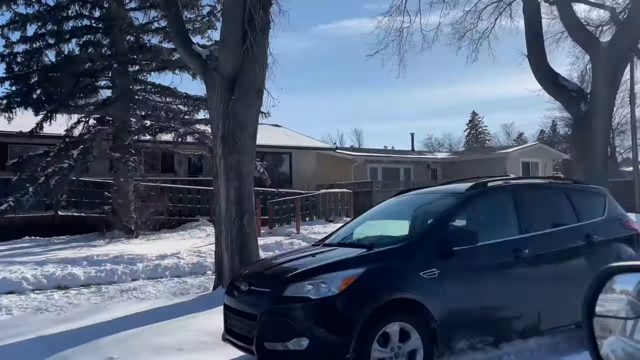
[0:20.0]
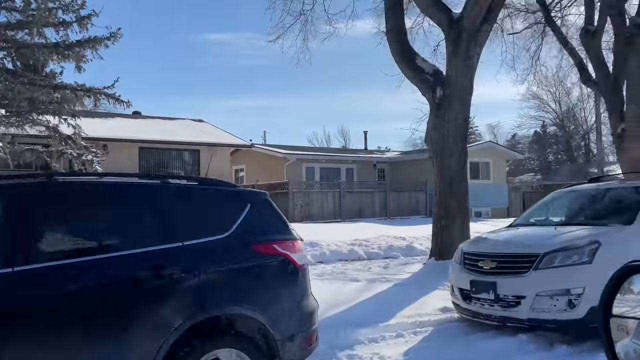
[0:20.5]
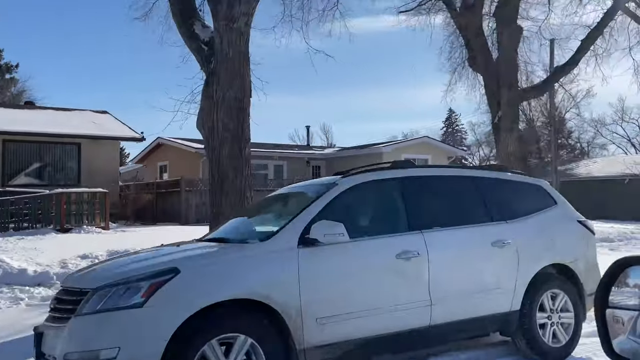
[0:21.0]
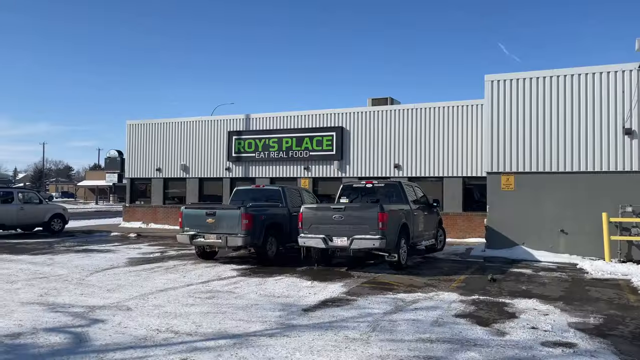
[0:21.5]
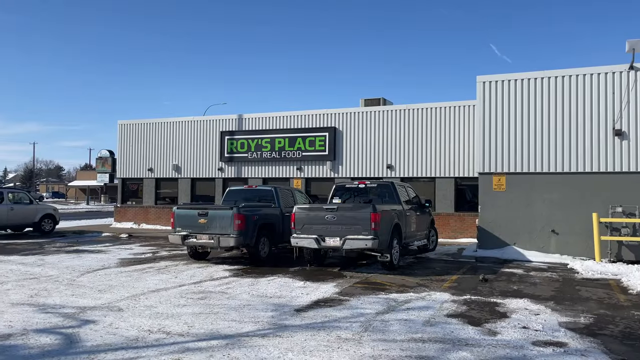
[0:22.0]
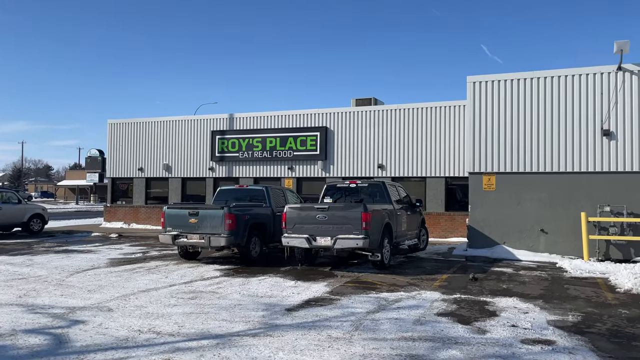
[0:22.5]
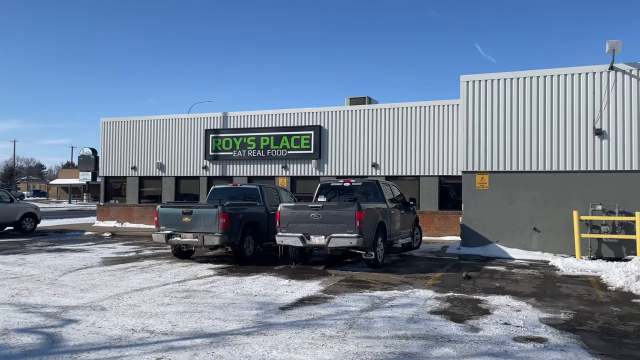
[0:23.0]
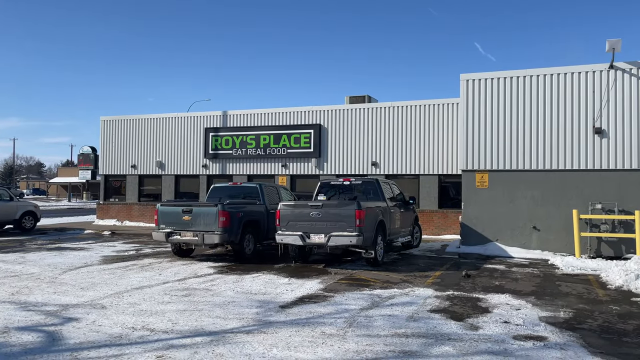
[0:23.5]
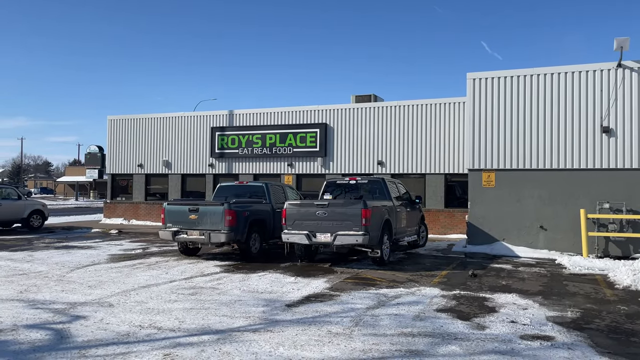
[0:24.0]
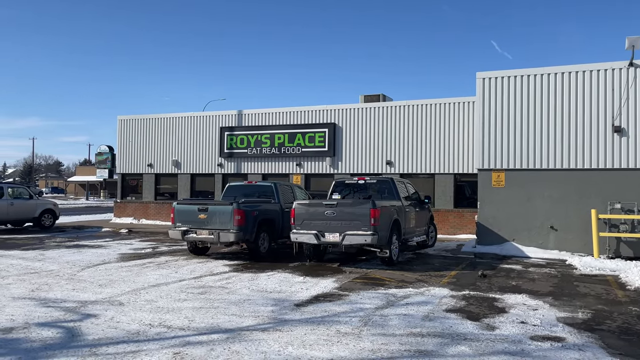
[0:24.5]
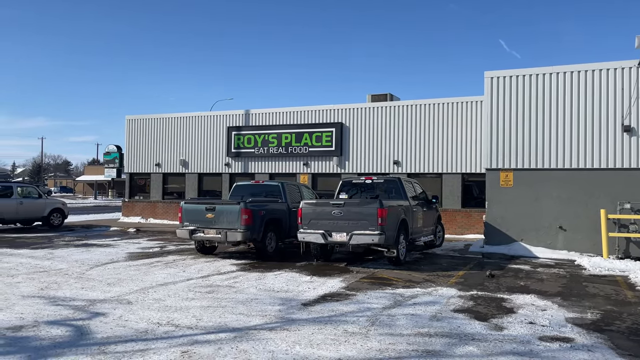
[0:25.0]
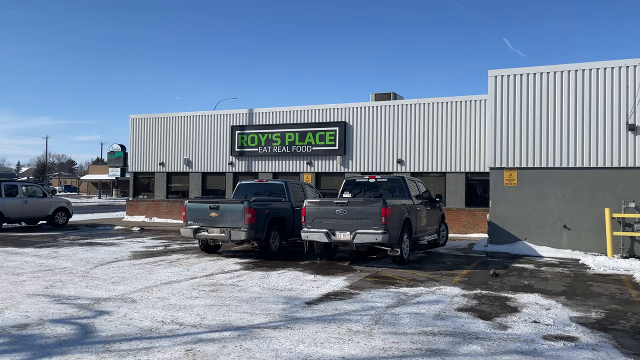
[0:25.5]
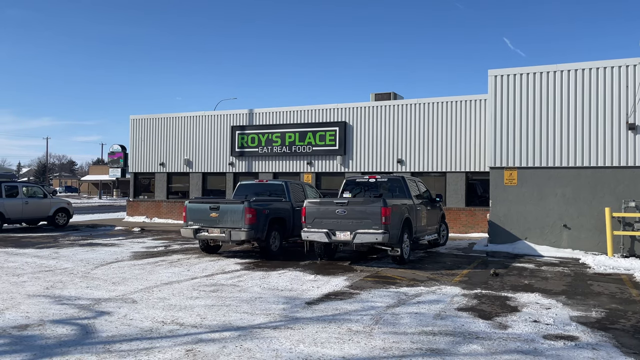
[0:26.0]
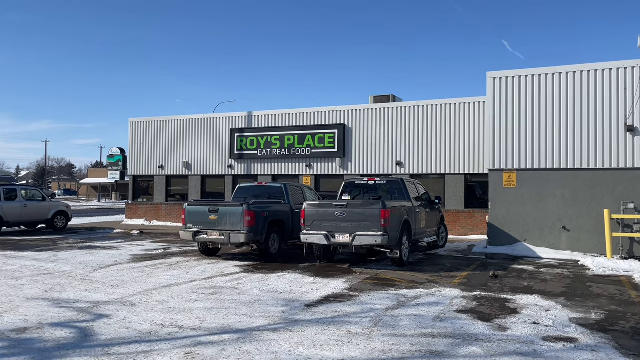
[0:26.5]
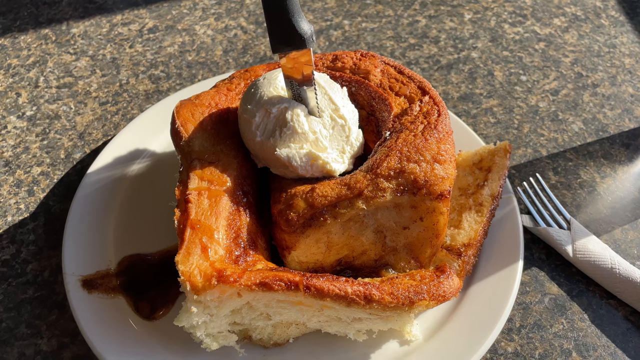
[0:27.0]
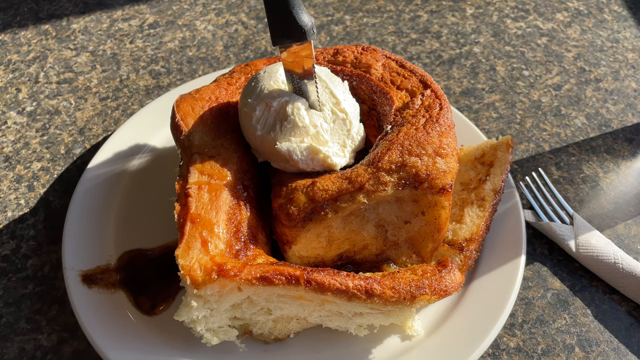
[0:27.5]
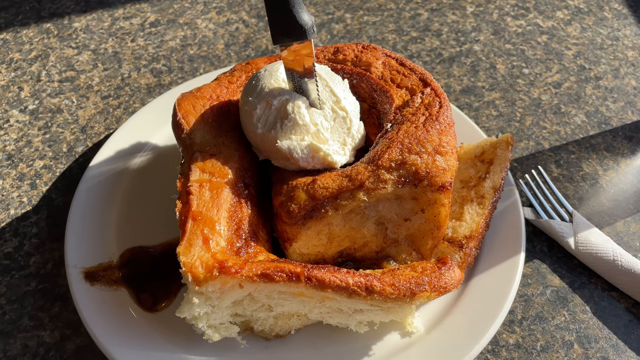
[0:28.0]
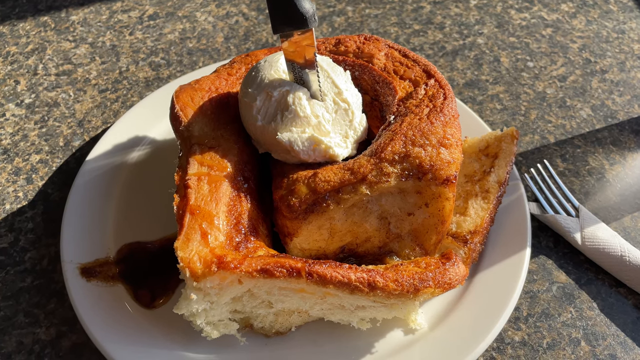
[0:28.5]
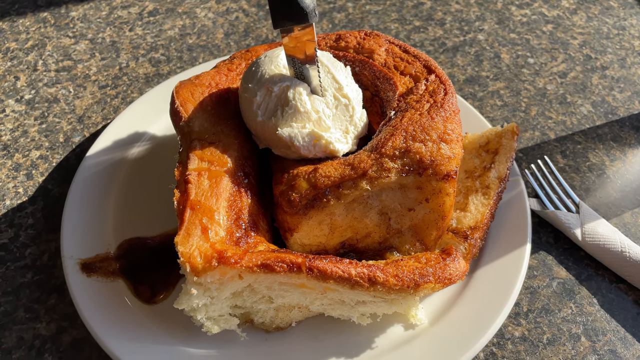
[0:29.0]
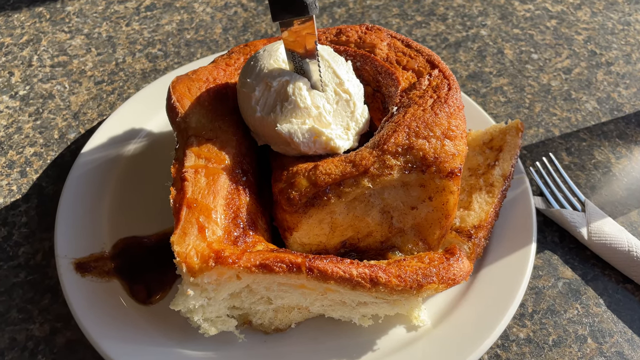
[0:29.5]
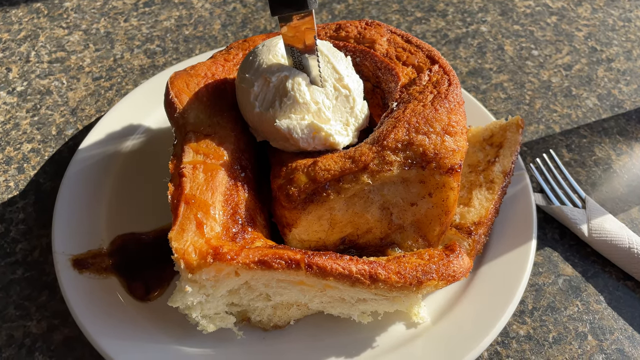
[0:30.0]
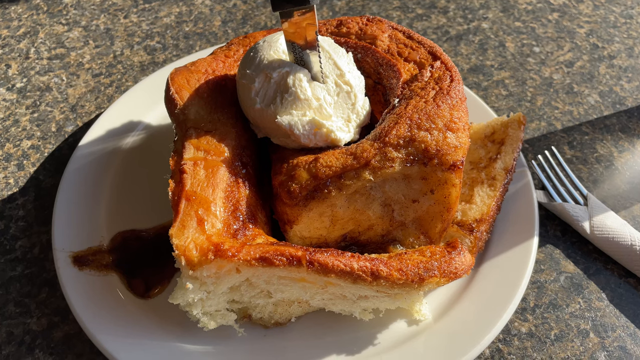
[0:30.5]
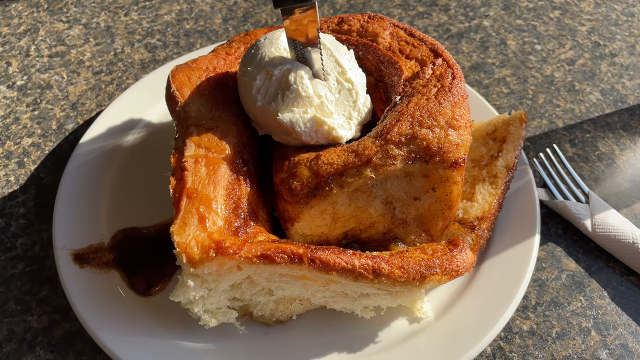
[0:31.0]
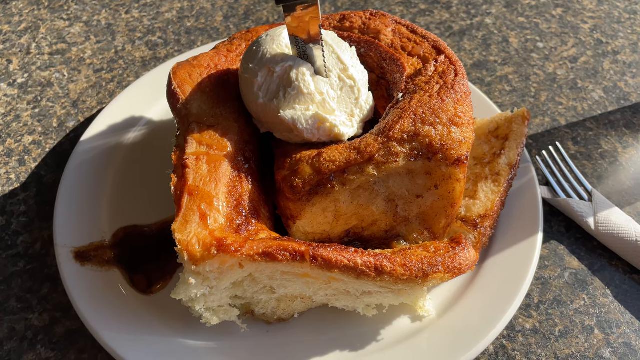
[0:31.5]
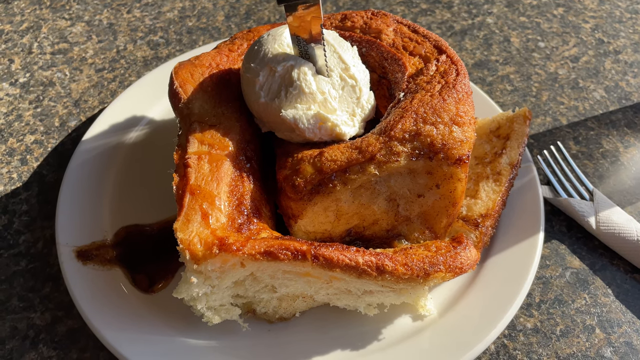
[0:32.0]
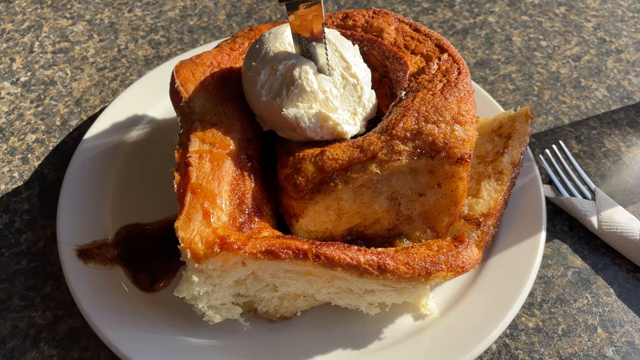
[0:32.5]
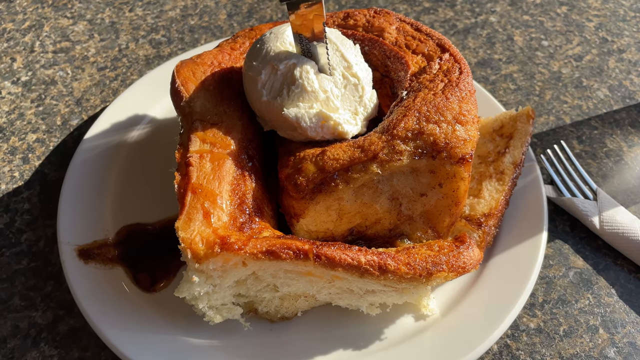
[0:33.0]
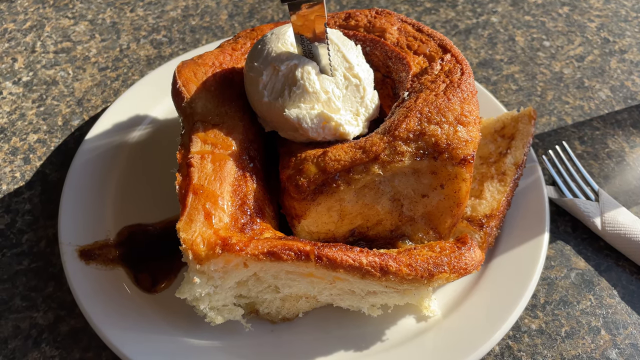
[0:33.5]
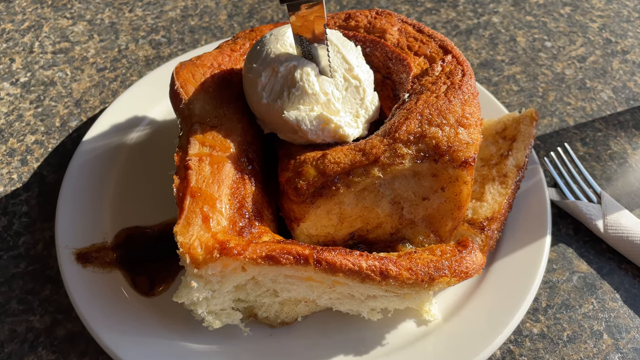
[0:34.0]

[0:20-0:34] A person drives by quickly in a car. A couple of cars are on the street in a neighborhood, with houses that look like pretty normal houses; the cars look like American cars, and the buildings look sort of mid-American. Next, a restaurant called Roy's Place is shown, with text saying "eat real food". It looks like they might be going inside. Afterwards, the video shows what they got there, which looks like a really nice sort of bread dessert.